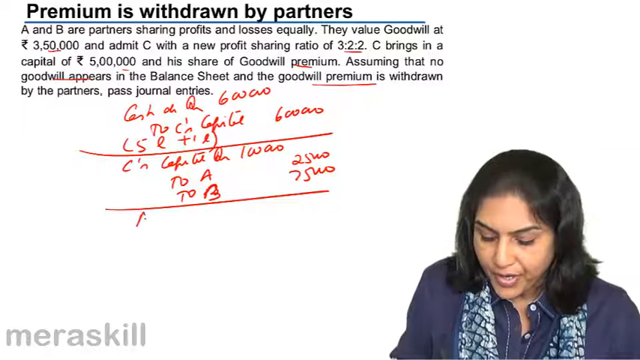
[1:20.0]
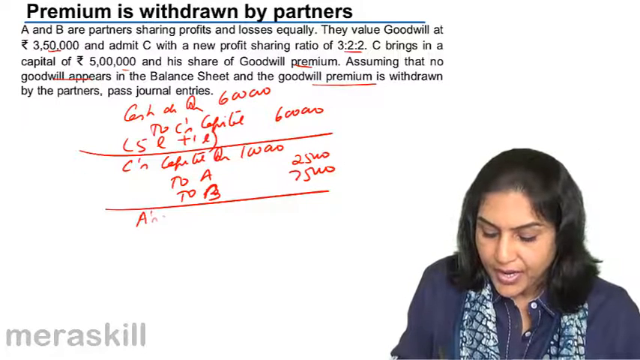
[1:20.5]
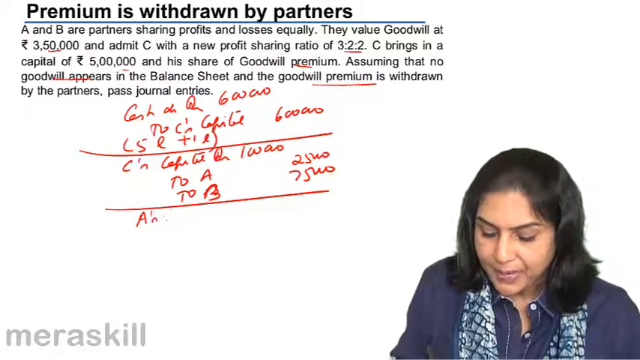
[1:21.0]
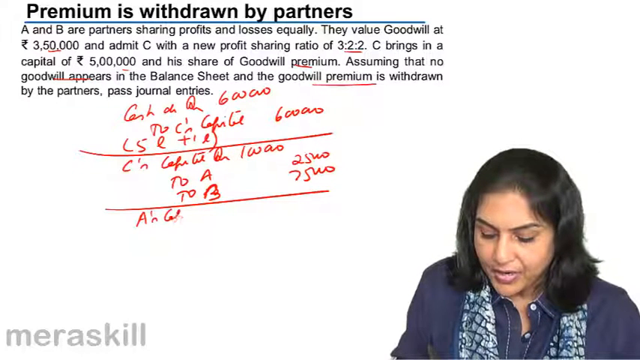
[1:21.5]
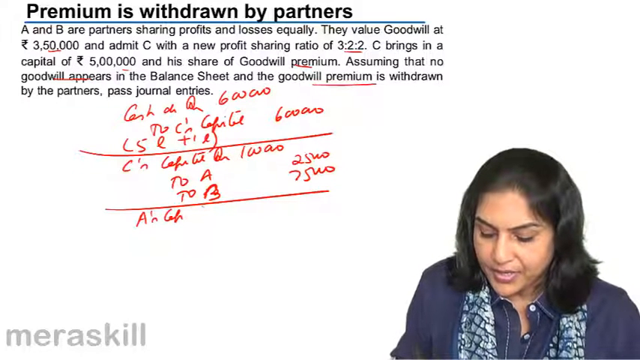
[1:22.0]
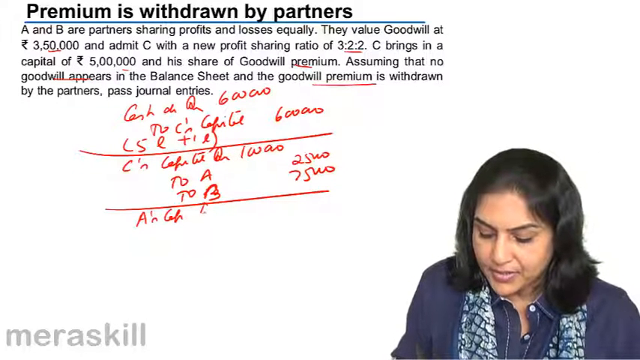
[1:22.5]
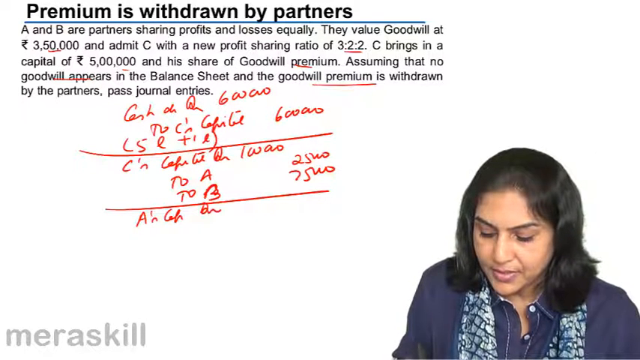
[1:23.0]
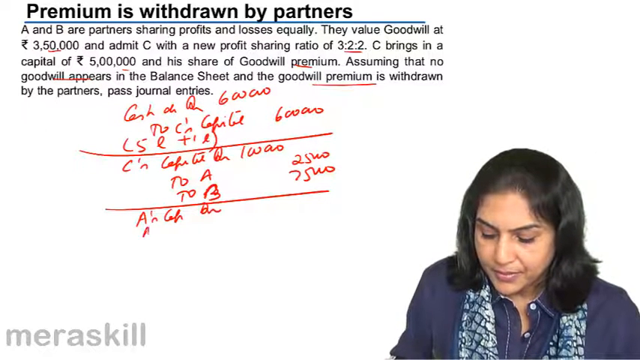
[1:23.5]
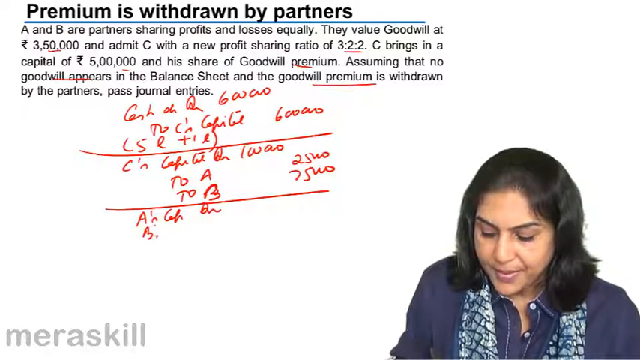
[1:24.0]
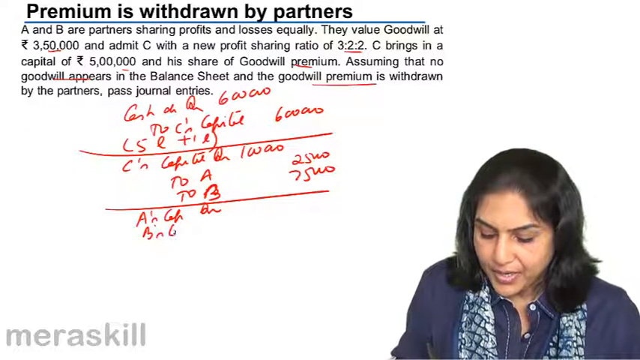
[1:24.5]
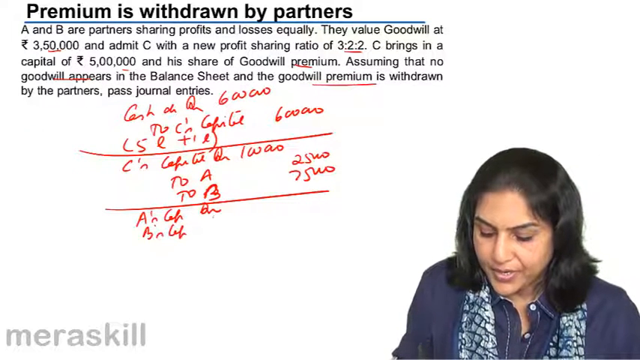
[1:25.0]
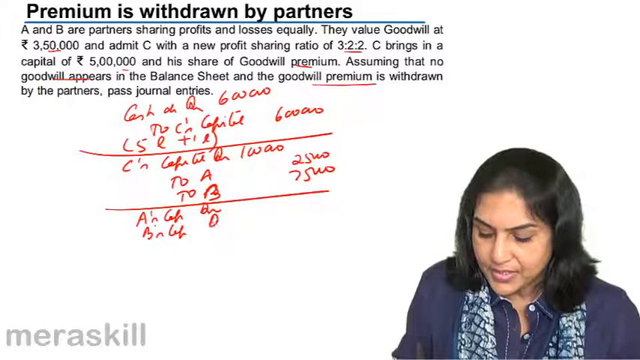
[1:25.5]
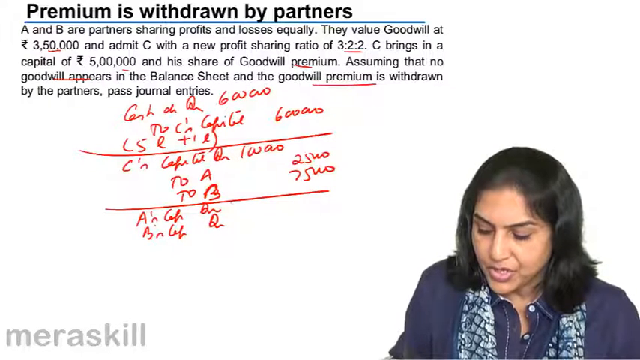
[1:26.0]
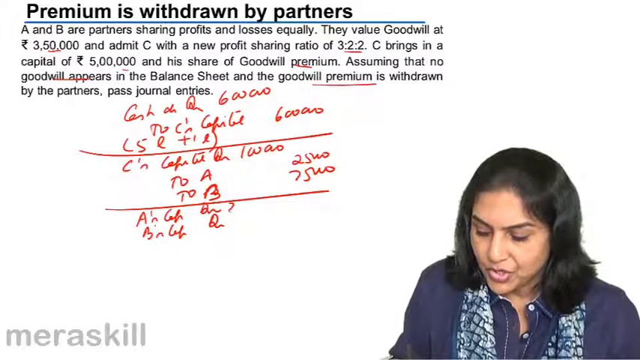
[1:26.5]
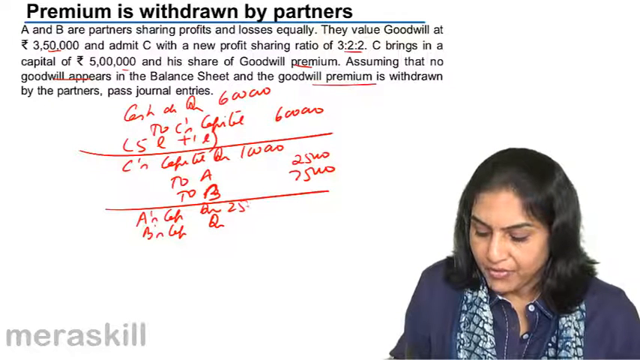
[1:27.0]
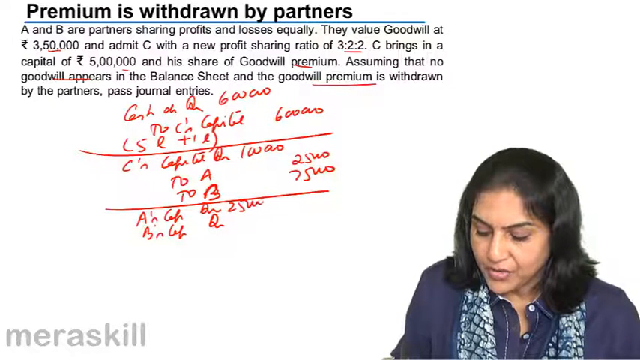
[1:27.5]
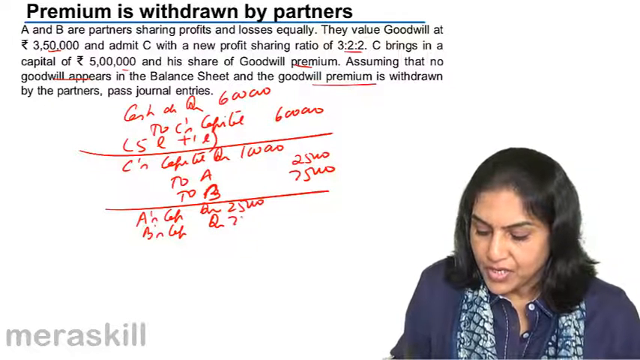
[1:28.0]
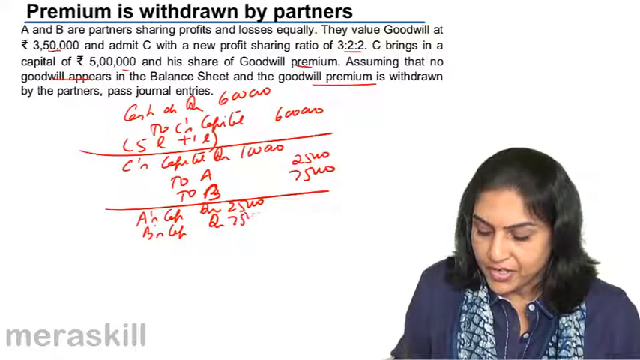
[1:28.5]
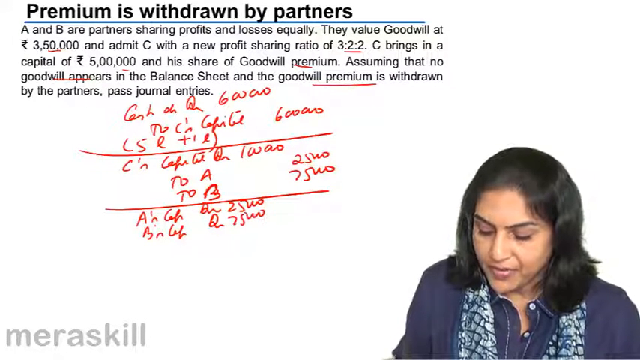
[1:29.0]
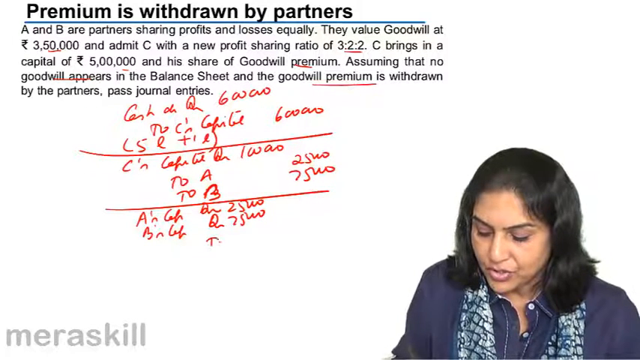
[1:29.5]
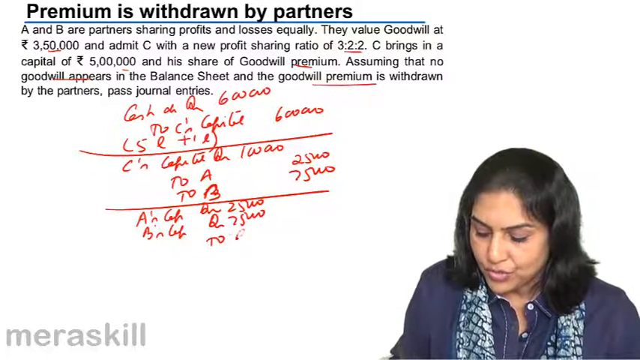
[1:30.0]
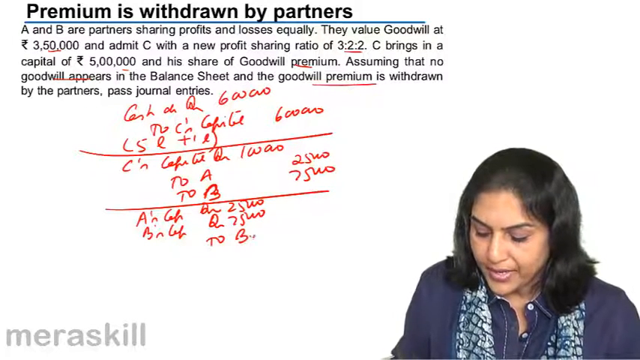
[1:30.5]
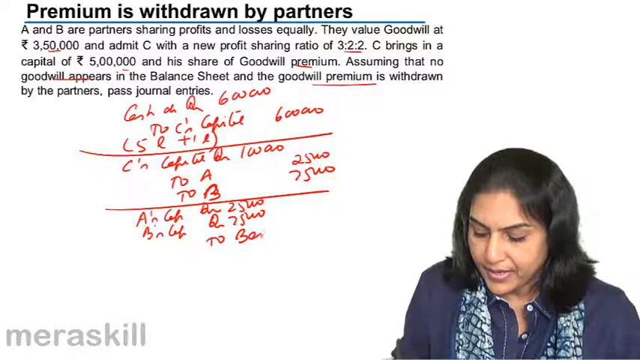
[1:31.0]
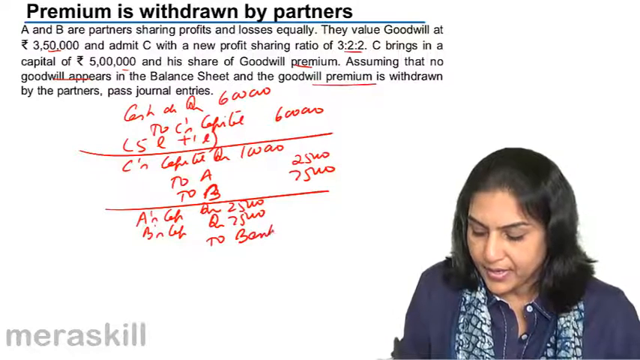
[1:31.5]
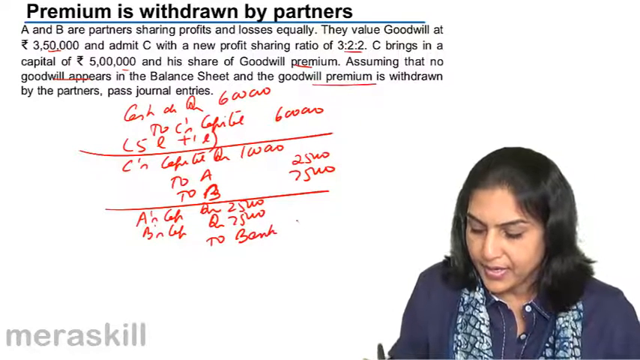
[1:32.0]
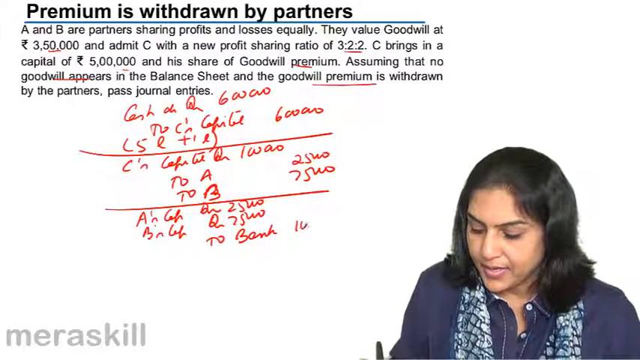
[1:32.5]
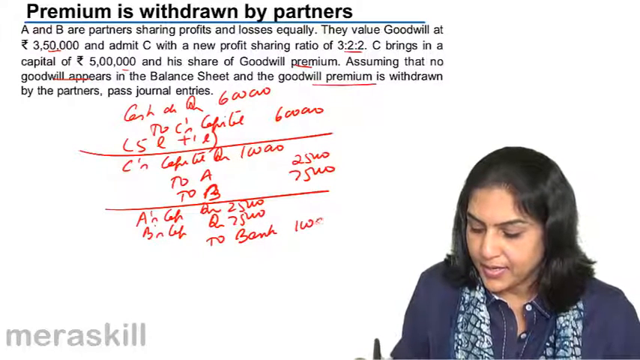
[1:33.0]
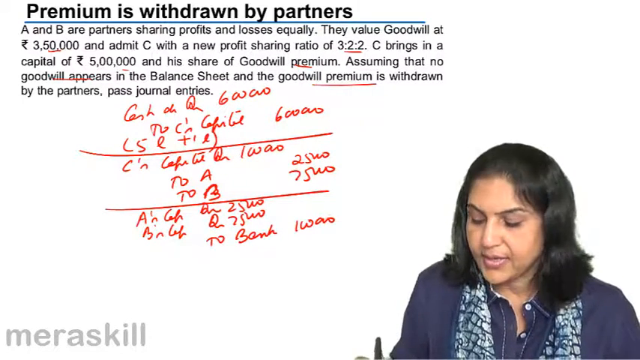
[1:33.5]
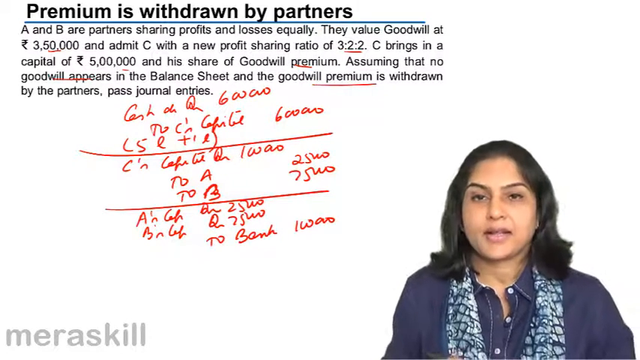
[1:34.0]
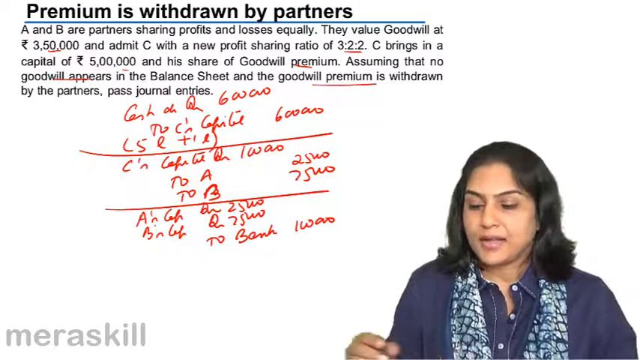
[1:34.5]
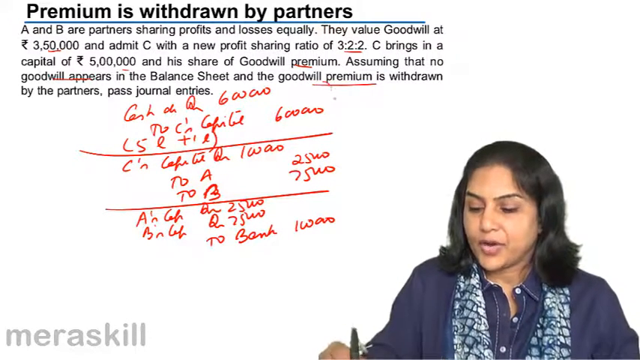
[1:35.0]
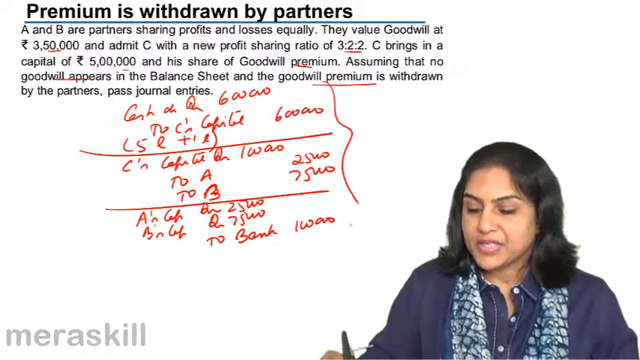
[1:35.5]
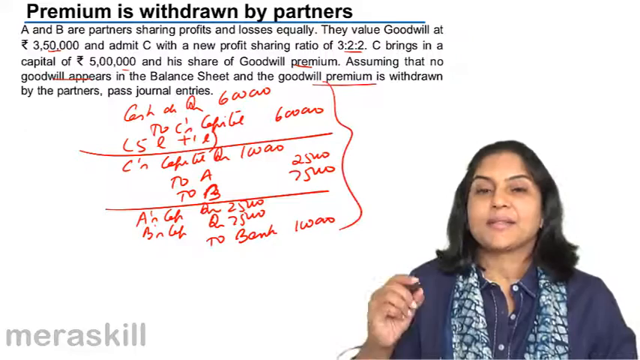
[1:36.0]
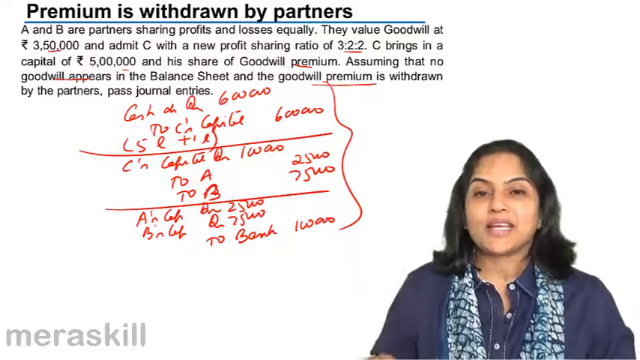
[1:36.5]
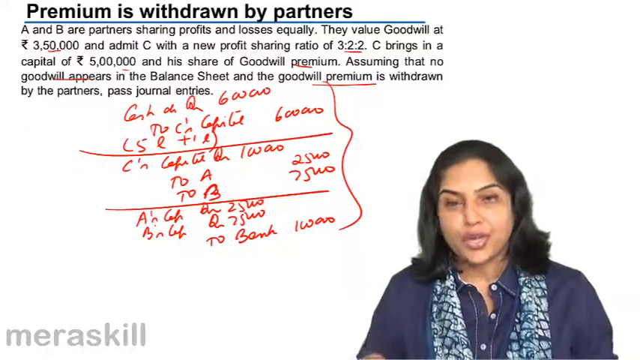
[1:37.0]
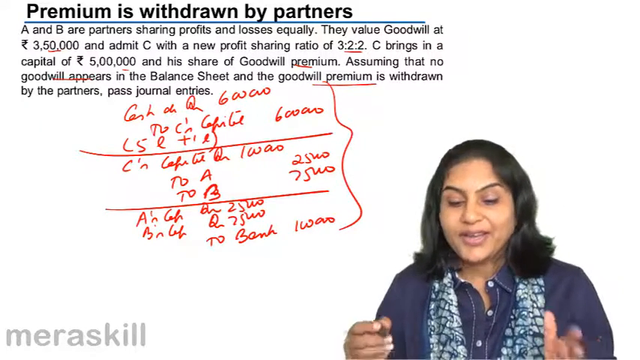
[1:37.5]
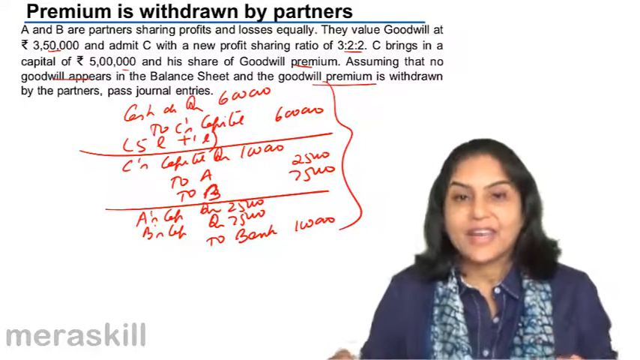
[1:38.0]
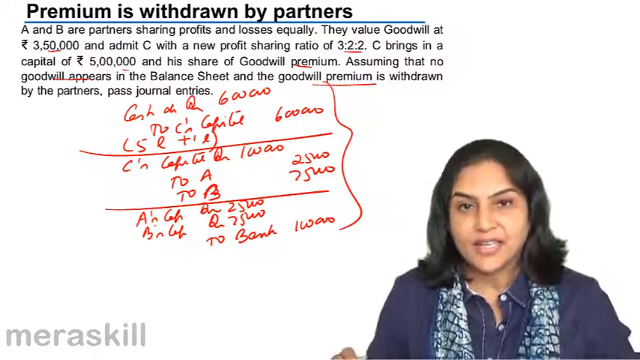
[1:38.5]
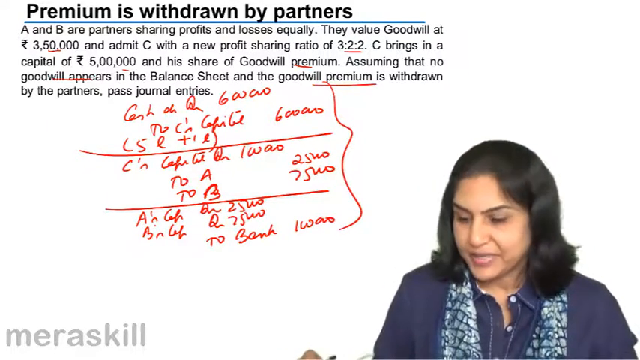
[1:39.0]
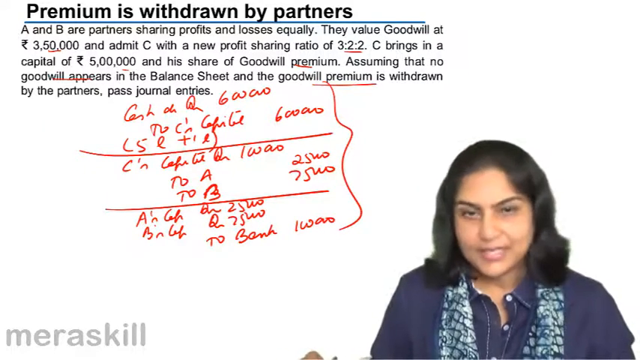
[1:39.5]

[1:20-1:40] The woman in the bottom right corner is continuously looking down at the device she is working on, focused. The pen moves from side to side at the bottom of the frame while text appears on the screen, showing her view; her adjusting, writing, note-making and underlining appear on the screen as she does them. She writes several short lines of text, some of them separated by a horizontal line. After writing a bit more, she stops and looks up abruptly, directly into the camera, then looks back down. The top of the pen is visible moving as she writes, and she makes a squiggly line on the right side of the section of text she wrote. She raises her hand with the pen briefly into view and back down, then raises both hands as she continues to speak.